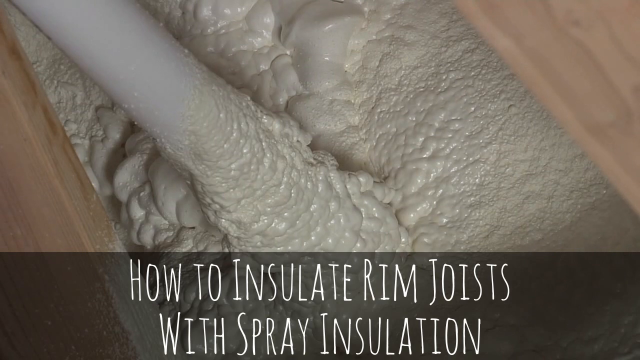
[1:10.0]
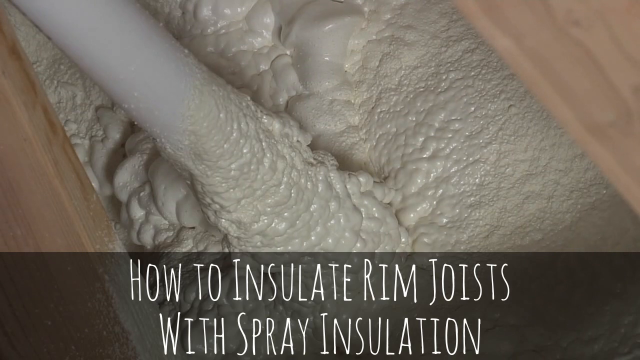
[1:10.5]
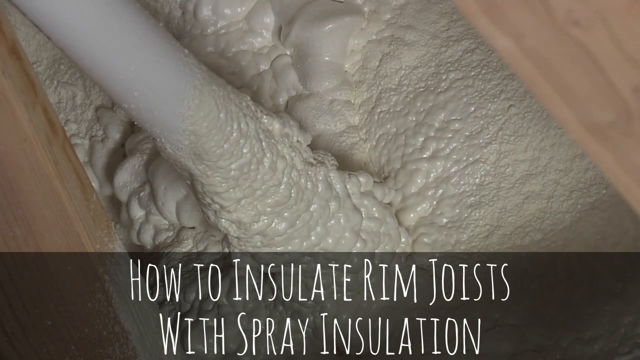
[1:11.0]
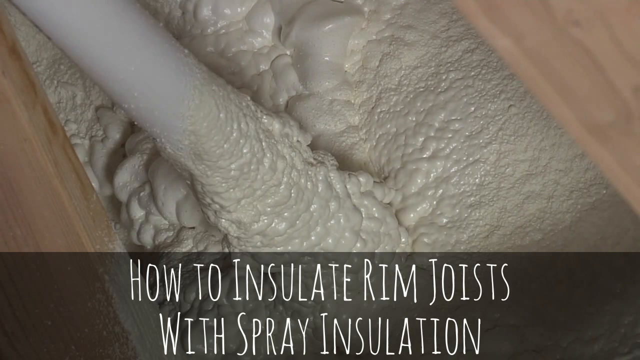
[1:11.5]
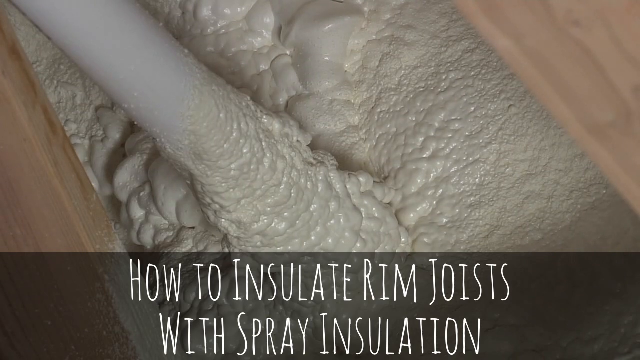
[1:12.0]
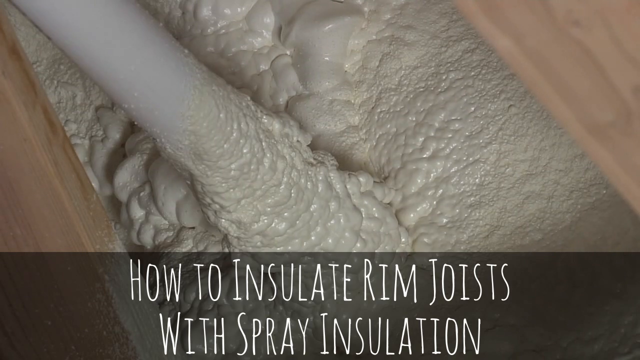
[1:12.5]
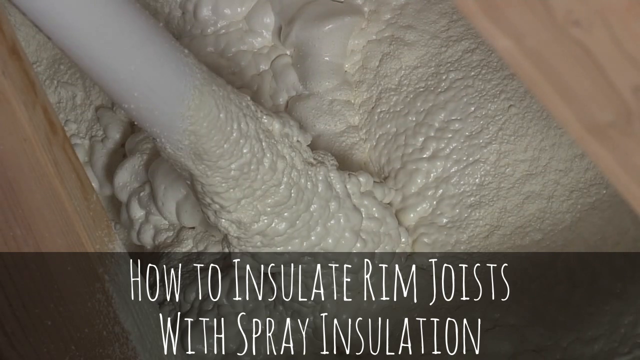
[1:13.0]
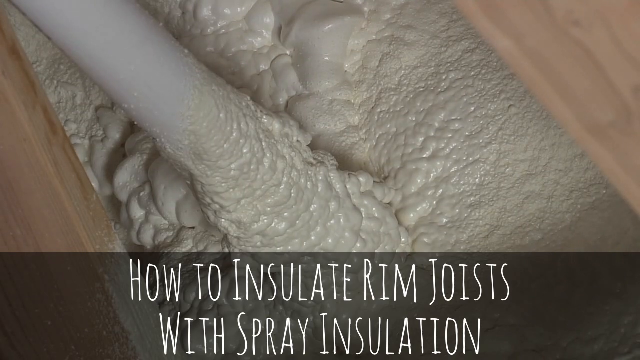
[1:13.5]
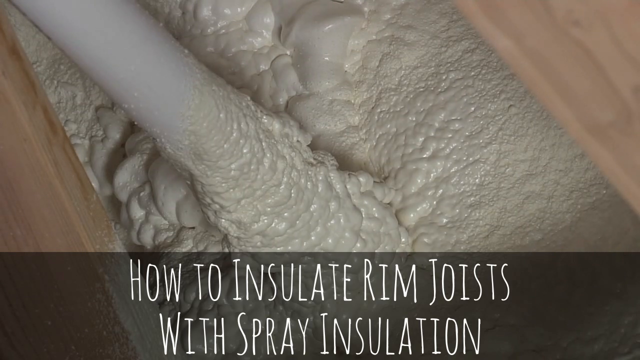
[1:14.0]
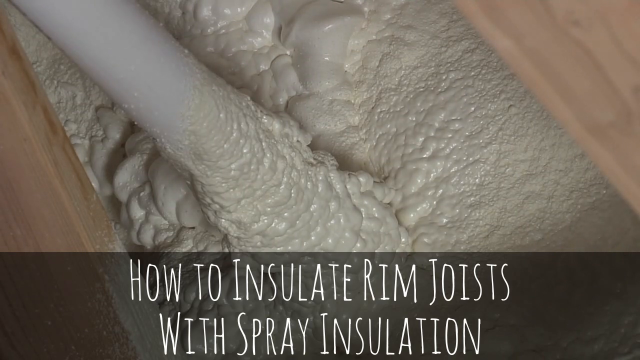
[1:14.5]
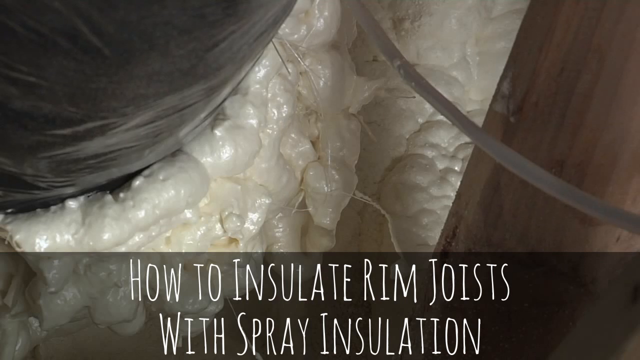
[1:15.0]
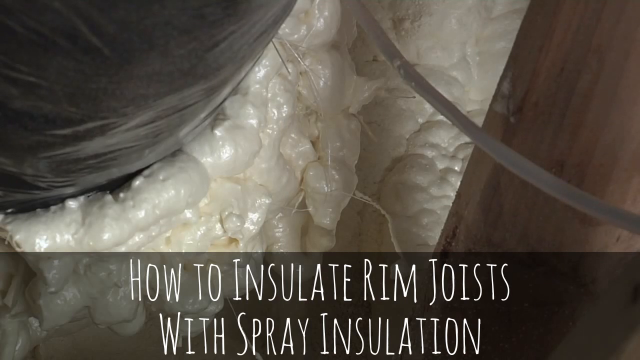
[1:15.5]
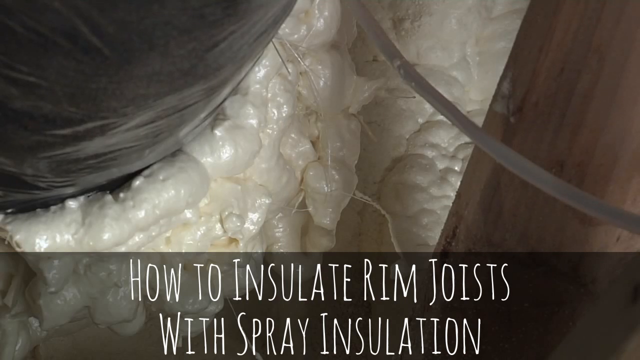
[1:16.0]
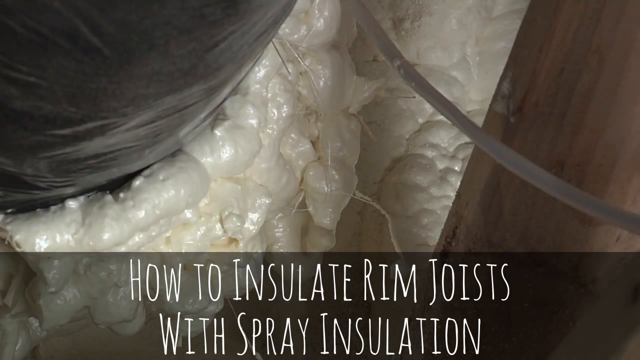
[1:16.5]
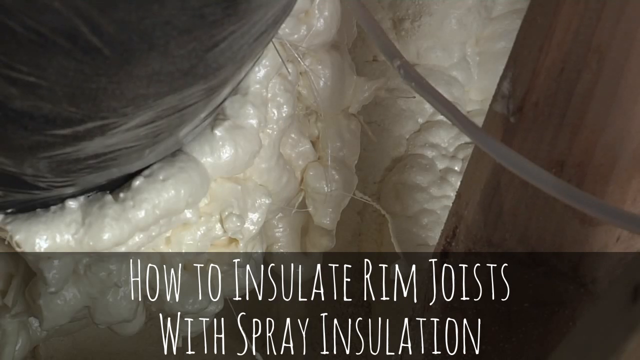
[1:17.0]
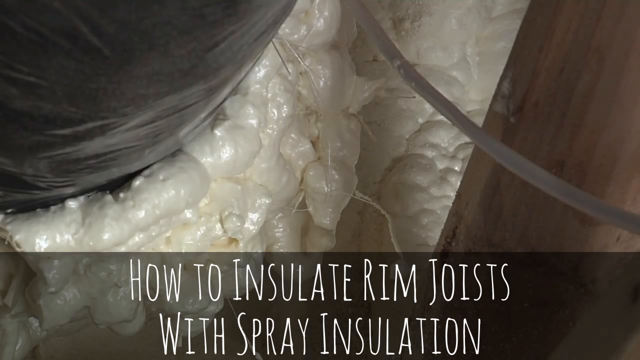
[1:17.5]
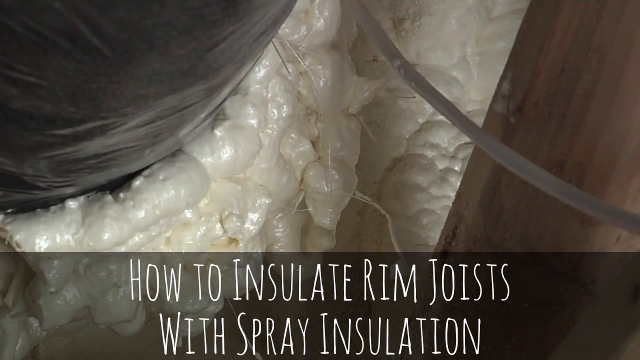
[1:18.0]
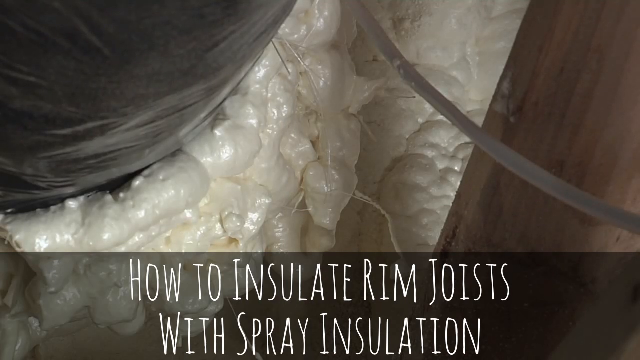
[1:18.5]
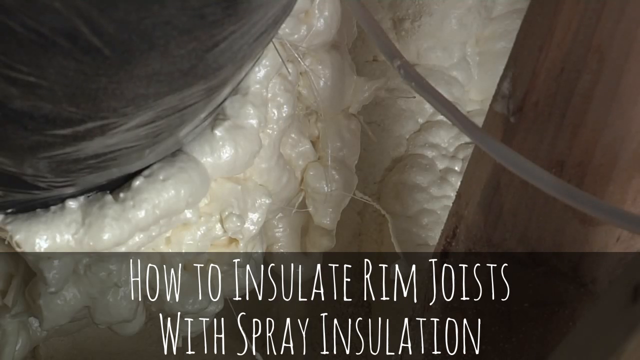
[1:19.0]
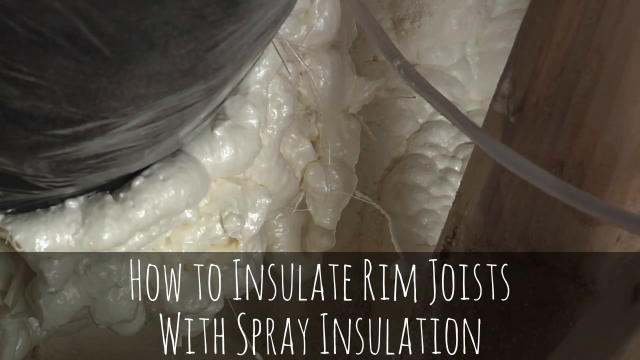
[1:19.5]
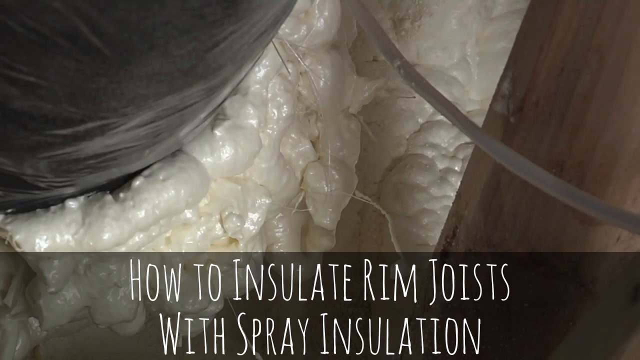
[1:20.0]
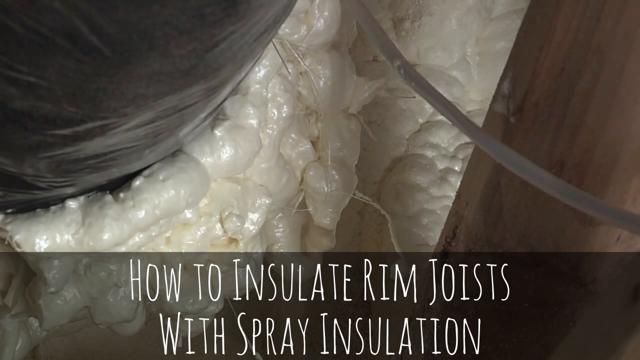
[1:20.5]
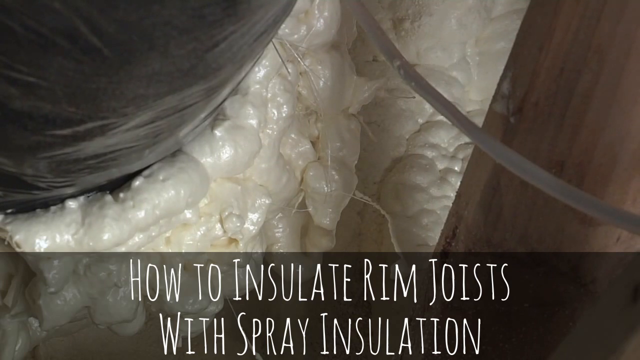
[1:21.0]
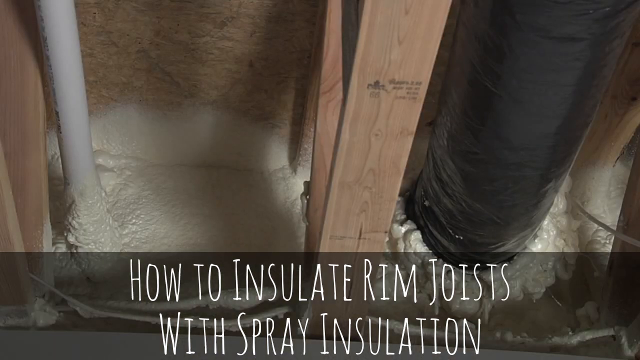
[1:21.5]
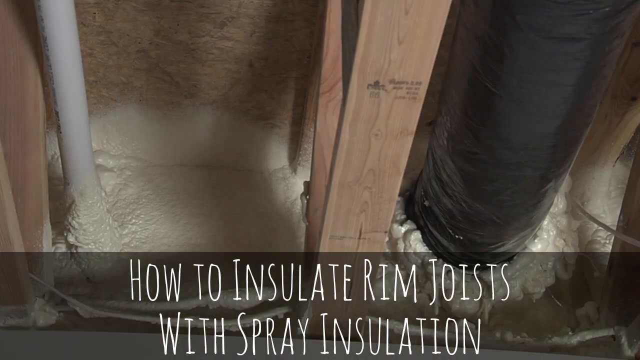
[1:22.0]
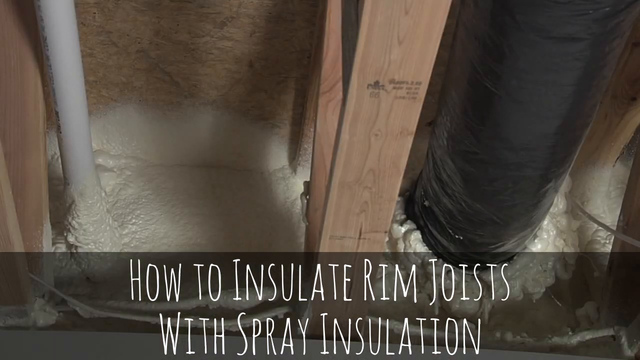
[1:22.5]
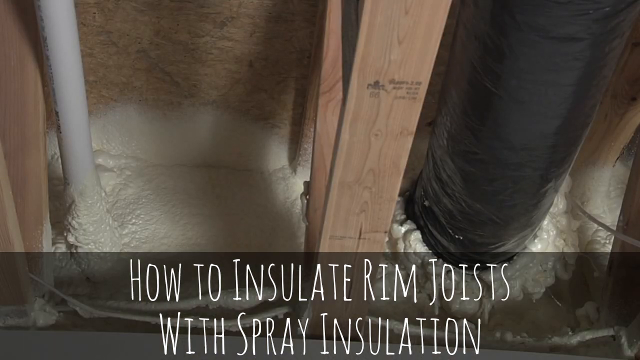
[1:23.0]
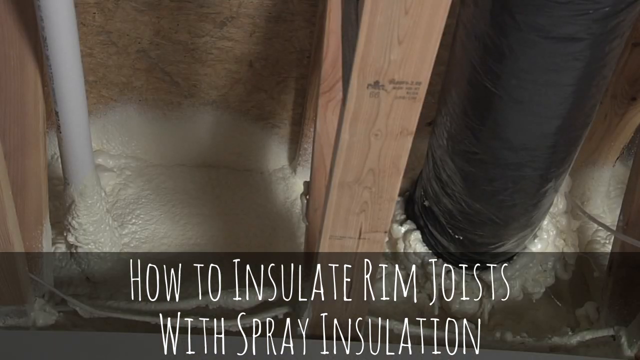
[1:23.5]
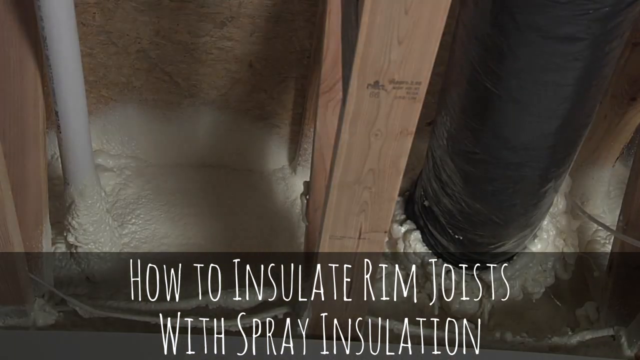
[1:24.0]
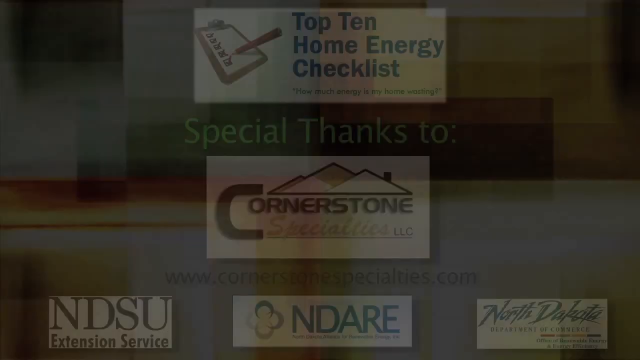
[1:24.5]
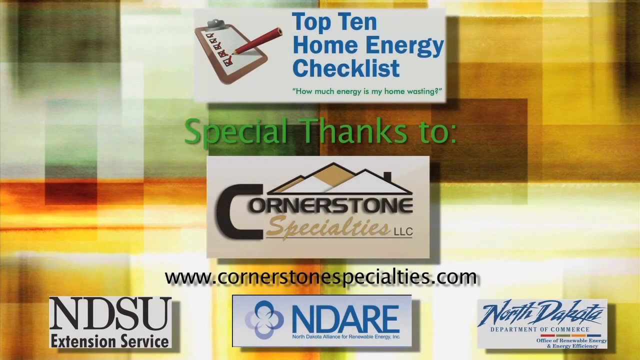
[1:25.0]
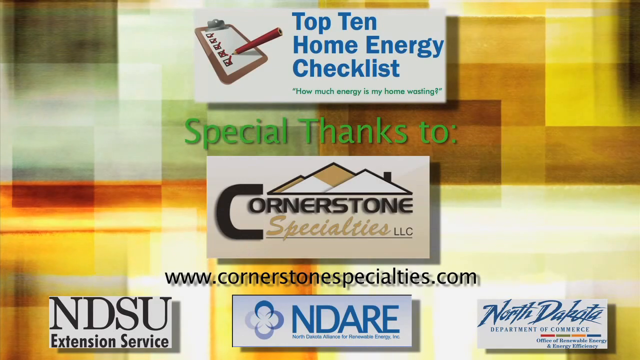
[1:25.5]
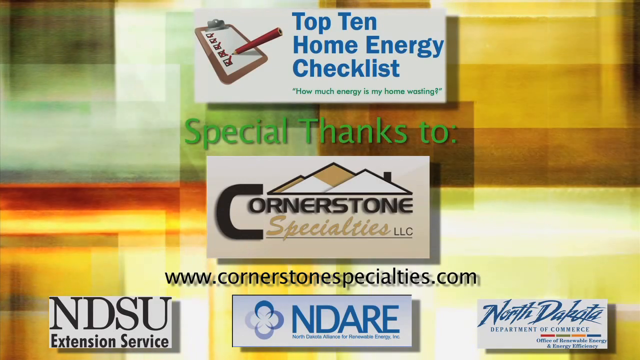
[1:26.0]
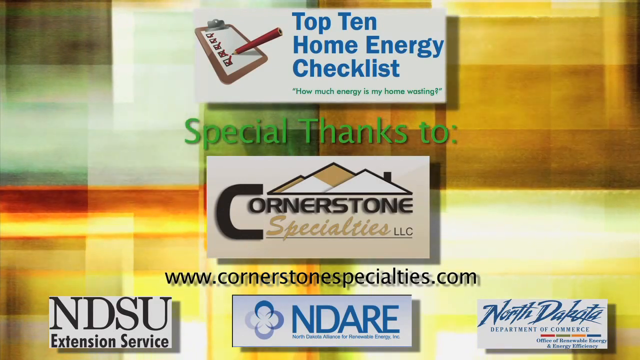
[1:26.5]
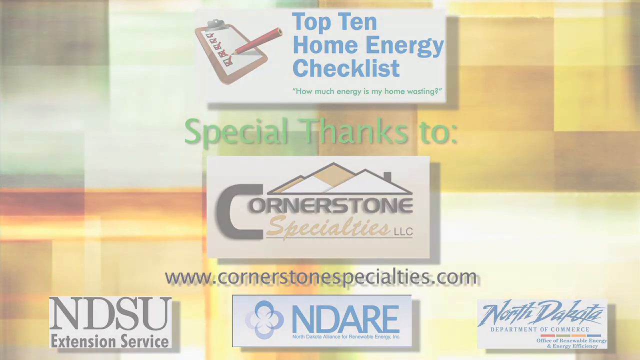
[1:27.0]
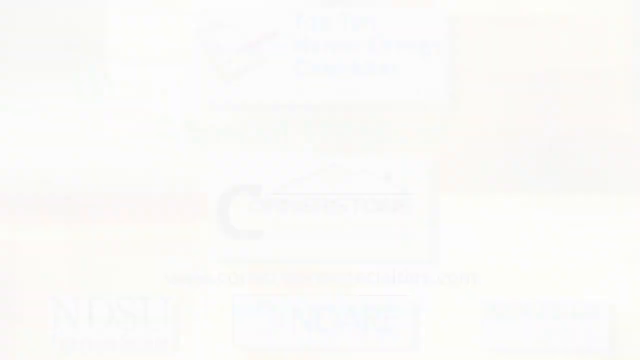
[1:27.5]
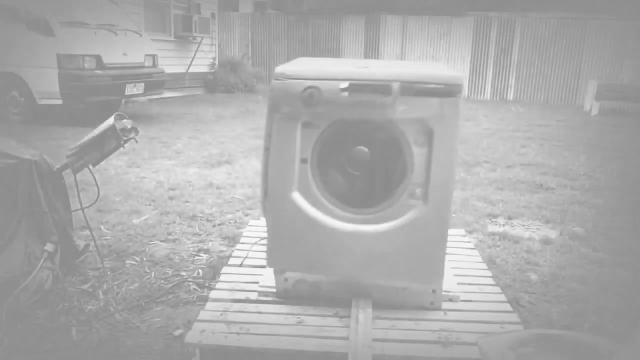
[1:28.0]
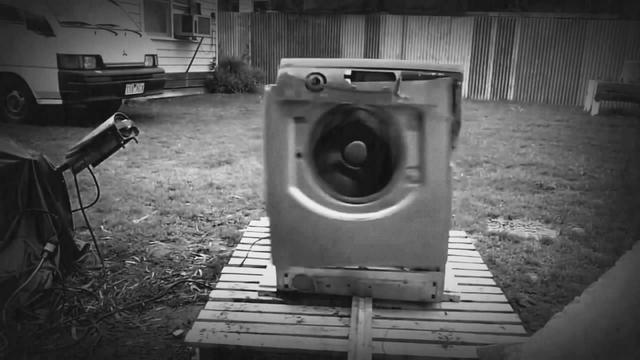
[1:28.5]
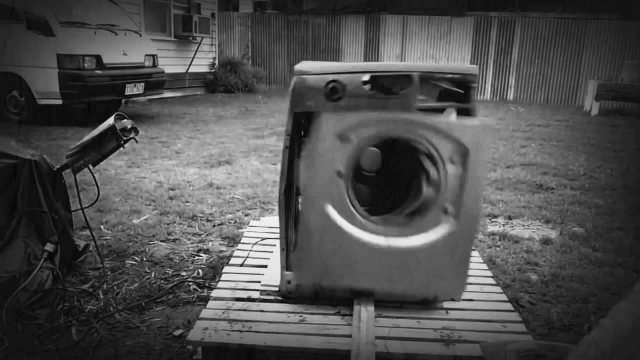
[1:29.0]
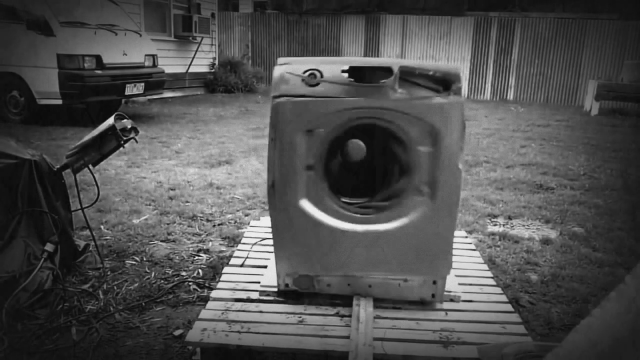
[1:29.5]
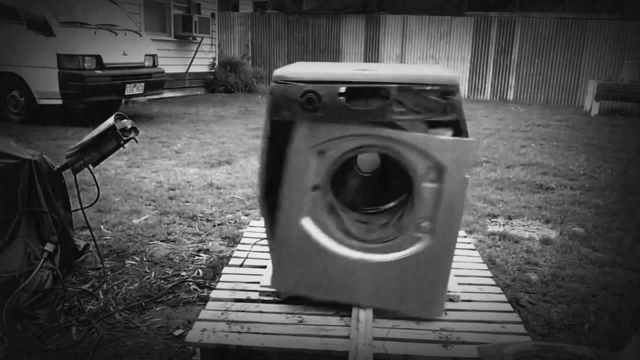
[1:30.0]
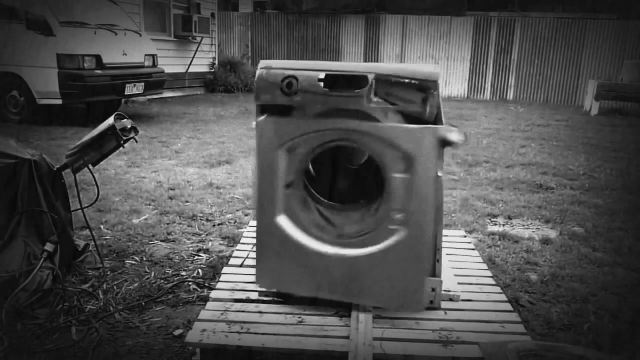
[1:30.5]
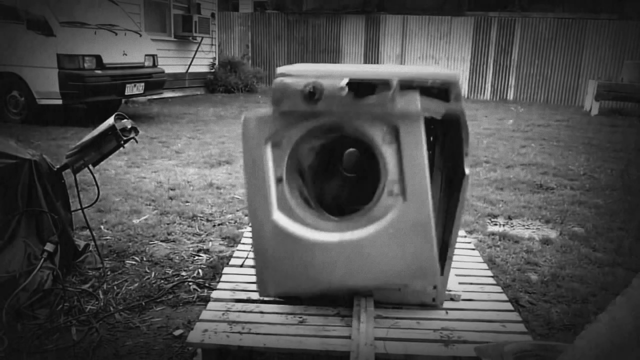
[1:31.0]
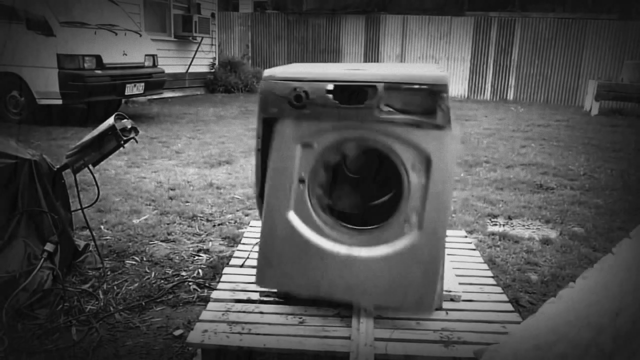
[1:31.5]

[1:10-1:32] The spray insulation looks like a foam-like material that goes tightly around the pipe. The view shifts and focuses on the black pipe, which is also insulated by the spray insulation. A picture of the roof shows planks and pipes running from top to bottom, with the smaller pipe on the left side and the black, bigger pipes on the right side. Some cables running across the roof are visible, along with the foam insulating the pipes. The video then changes to another background with the writing "Top 10 home energy checklists" and "How much energy is my home wasting?", with a picture of a red pen ticking a tick box. Green writing then says "special thanks to", with "cornerstone" and a logo under it, followed by the website and contact details.